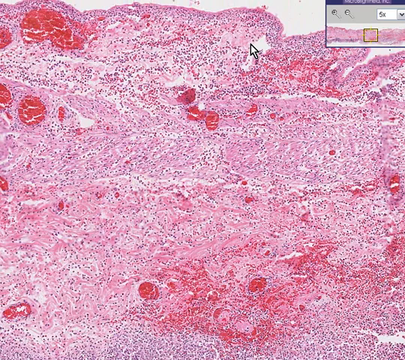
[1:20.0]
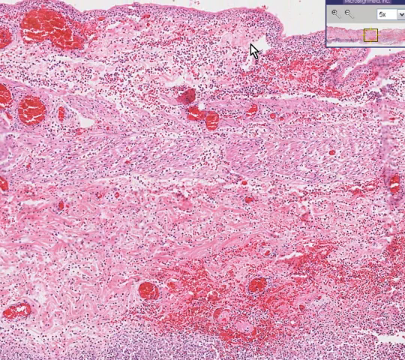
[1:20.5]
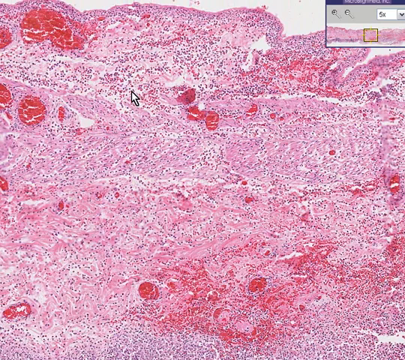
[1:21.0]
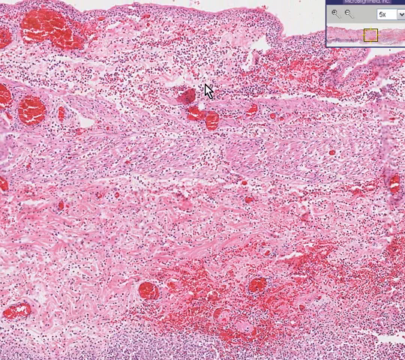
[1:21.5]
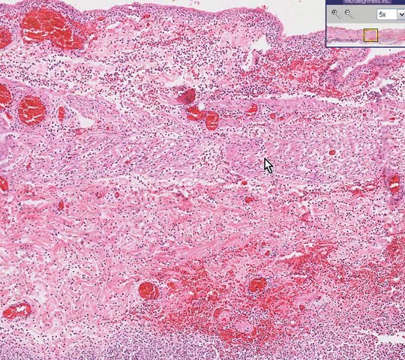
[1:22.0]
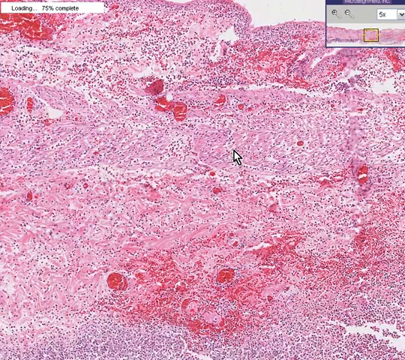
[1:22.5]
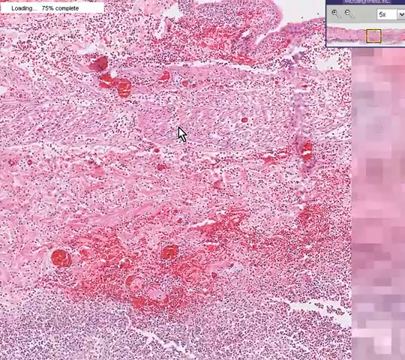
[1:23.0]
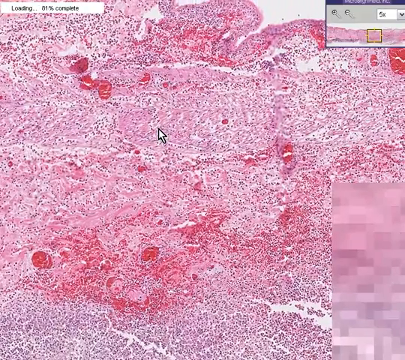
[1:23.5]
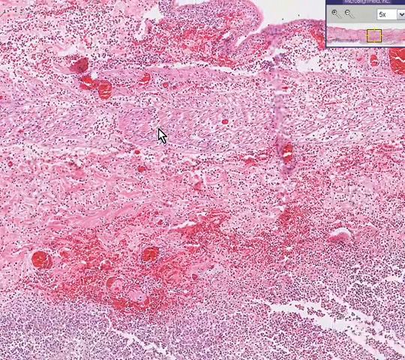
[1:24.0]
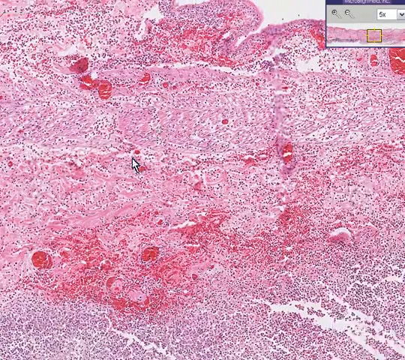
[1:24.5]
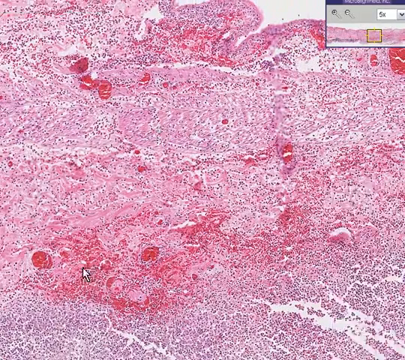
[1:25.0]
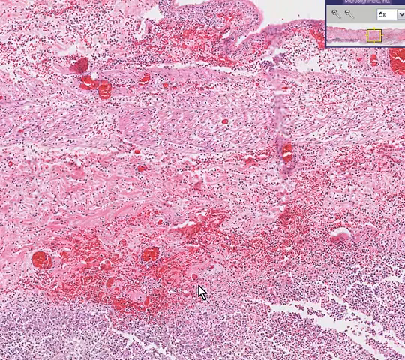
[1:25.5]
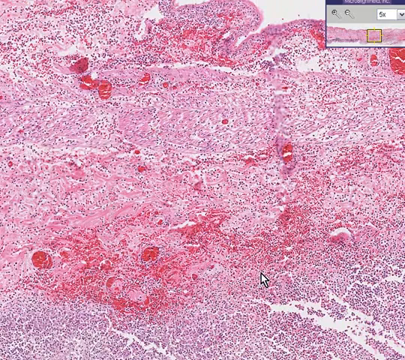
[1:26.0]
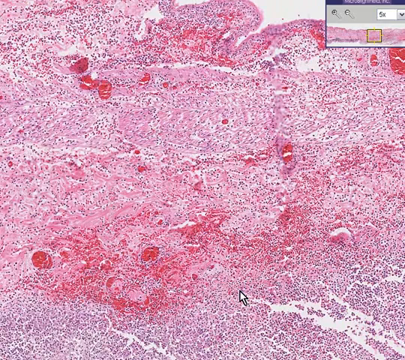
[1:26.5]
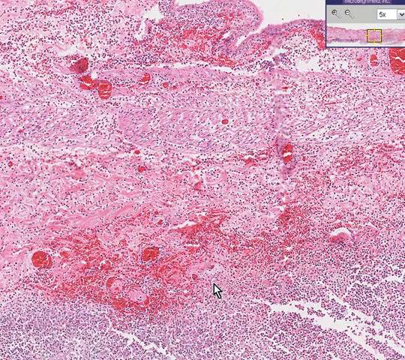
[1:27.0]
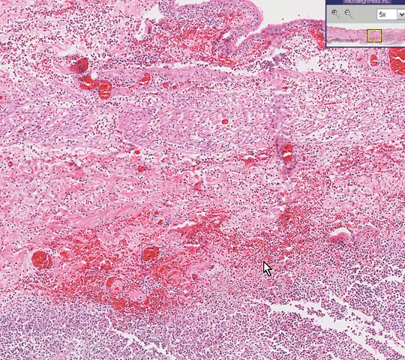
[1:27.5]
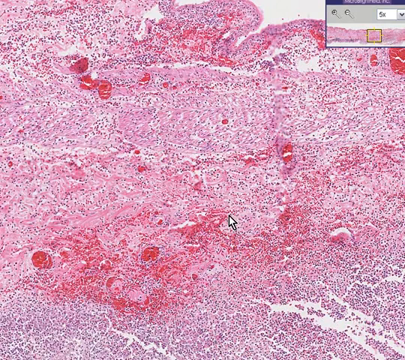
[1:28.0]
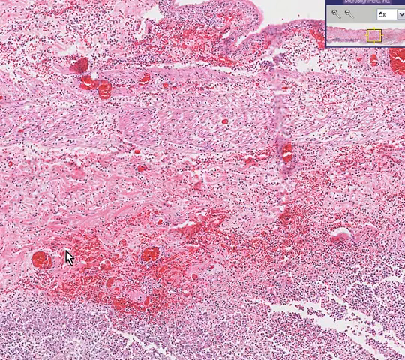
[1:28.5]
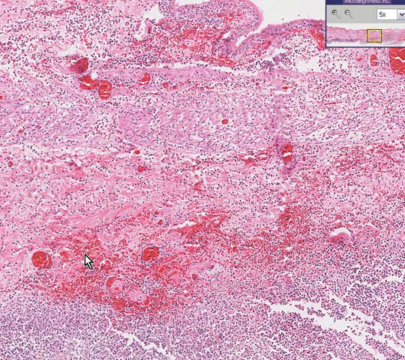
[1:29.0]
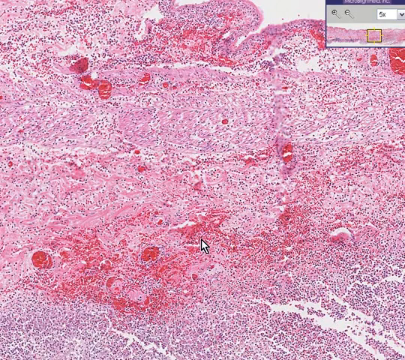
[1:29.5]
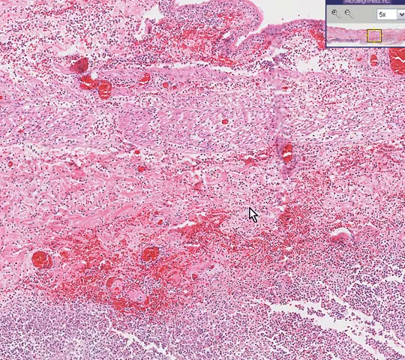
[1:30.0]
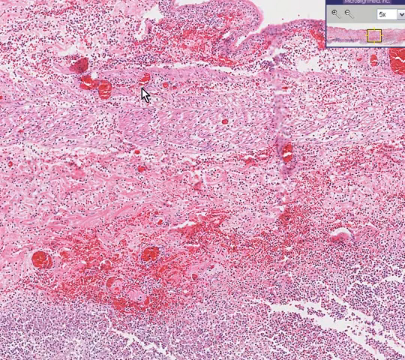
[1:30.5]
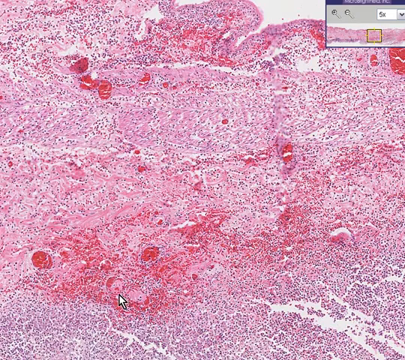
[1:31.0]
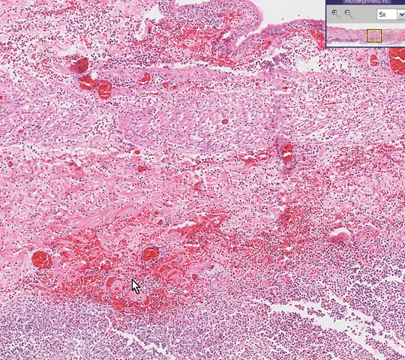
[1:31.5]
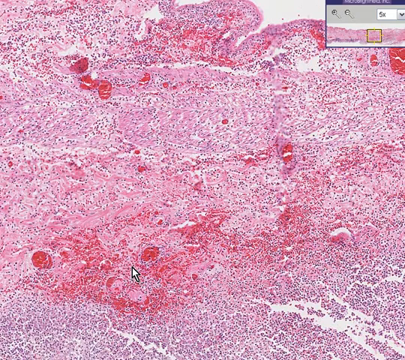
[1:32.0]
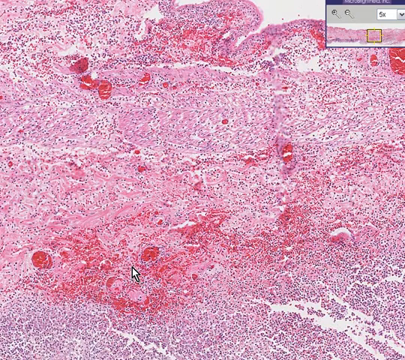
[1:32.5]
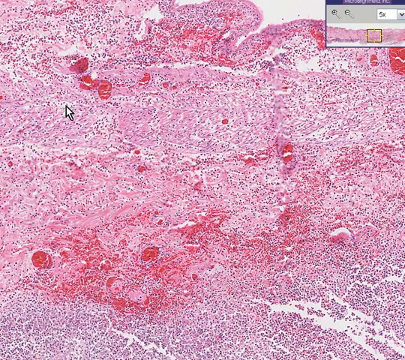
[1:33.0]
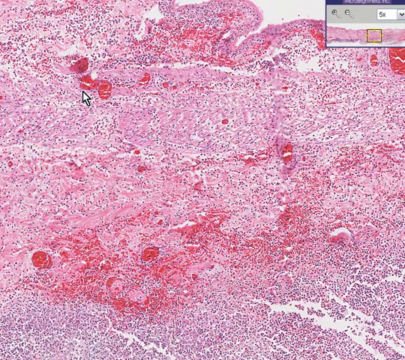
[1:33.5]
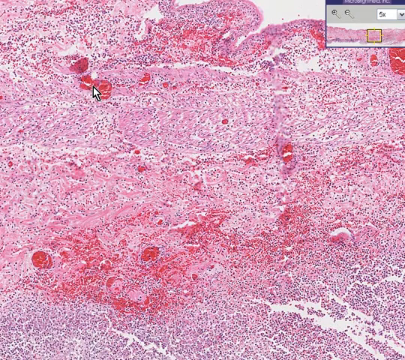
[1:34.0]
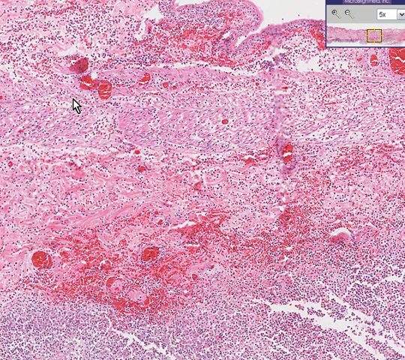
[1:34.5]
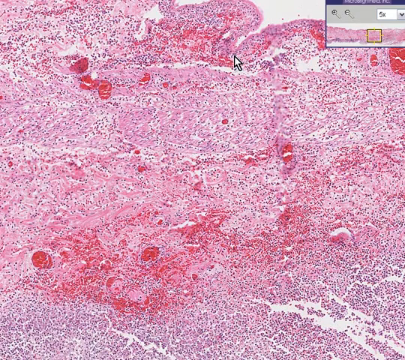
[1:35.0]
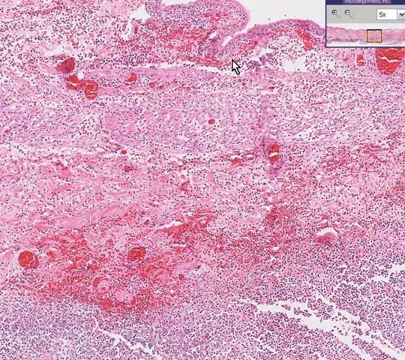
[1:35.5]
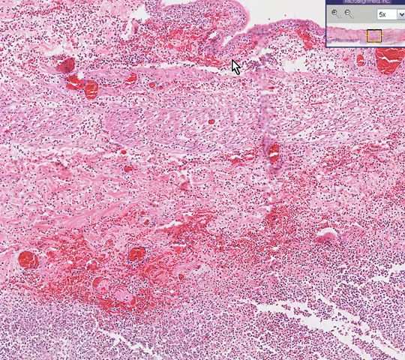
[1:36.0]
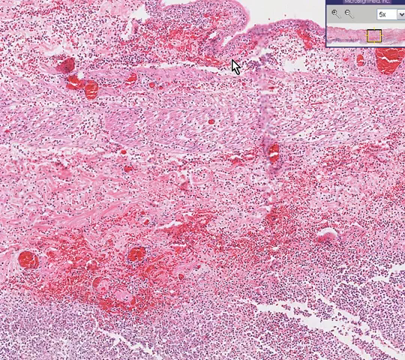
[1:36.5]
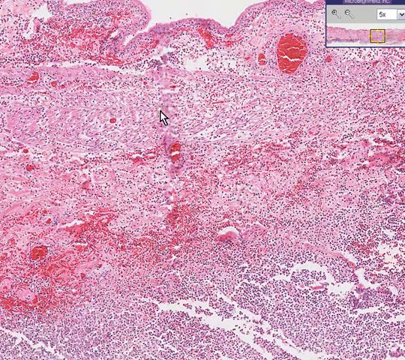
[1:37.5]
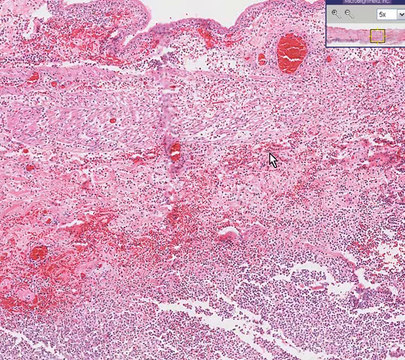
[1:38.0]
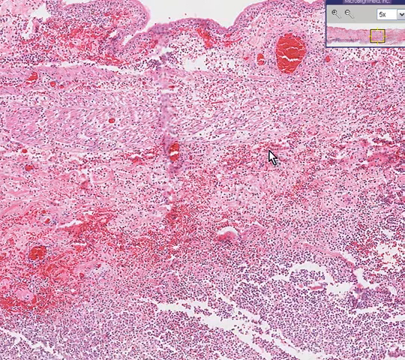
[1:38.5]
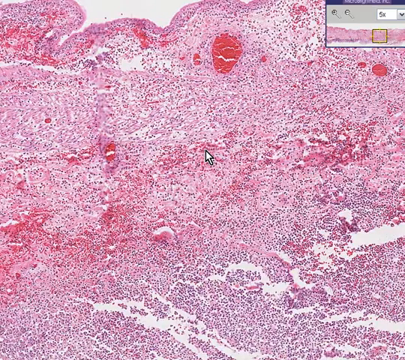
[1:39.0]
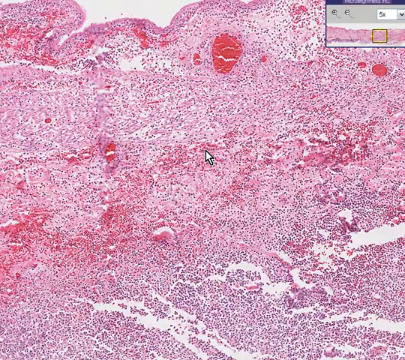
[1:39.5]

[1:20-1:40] A pink and purple image looks like it might be a slice of tissue under a microscope. It has dark pinkish-reddish dots, both larger and smaller circles, and a bunch of white lines running through it, and it looks faded. The mouse cursor moves left and right and makes circular motions across parts of the image, pointing at things as if the person is trying to explain something. It points at some of the larger red or dark pink dots, then grabs the screen and moves it toward the right a few times and points at more dots. At the top right corner, a picture of the same image reads "5X".